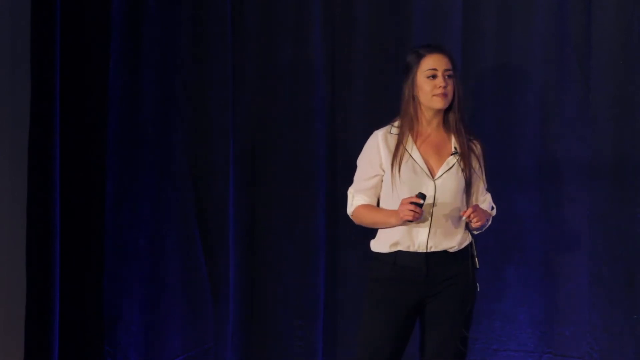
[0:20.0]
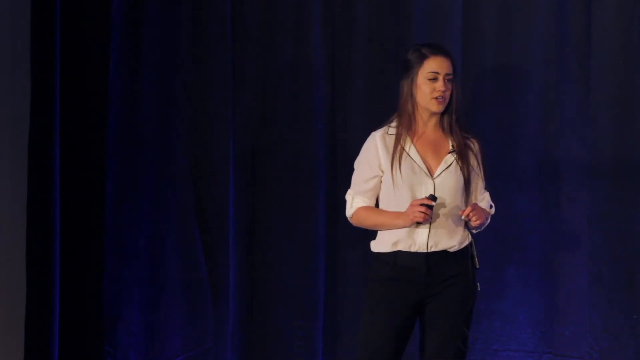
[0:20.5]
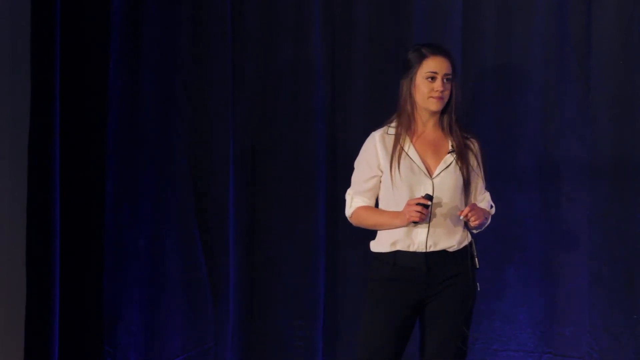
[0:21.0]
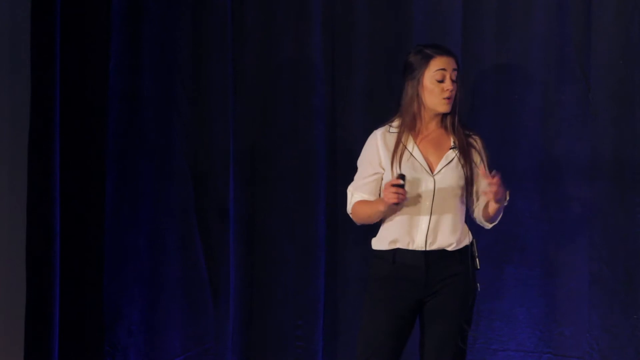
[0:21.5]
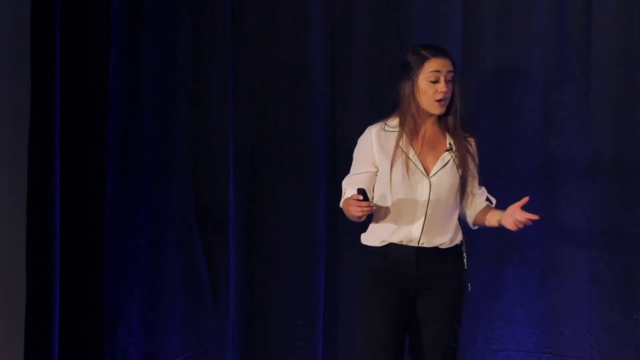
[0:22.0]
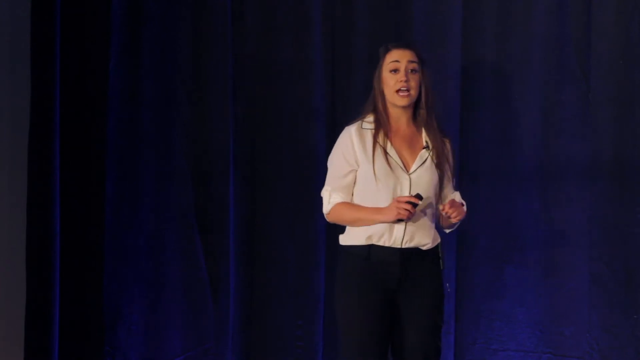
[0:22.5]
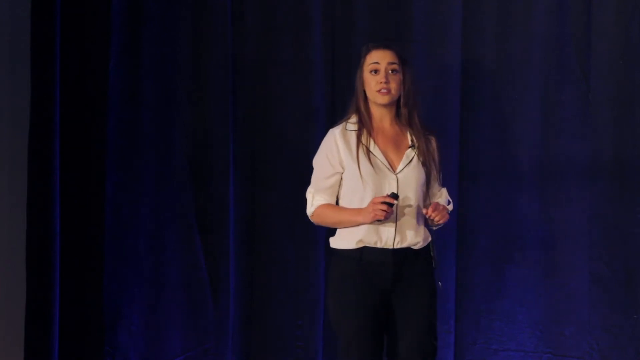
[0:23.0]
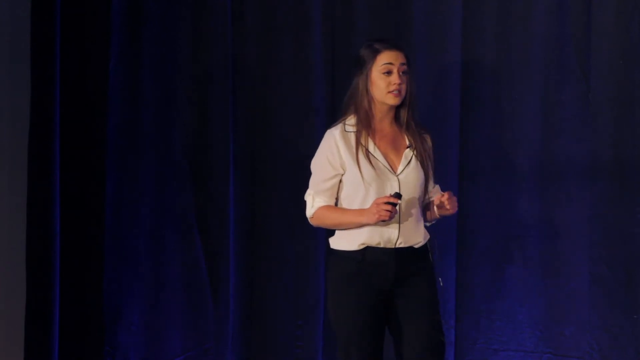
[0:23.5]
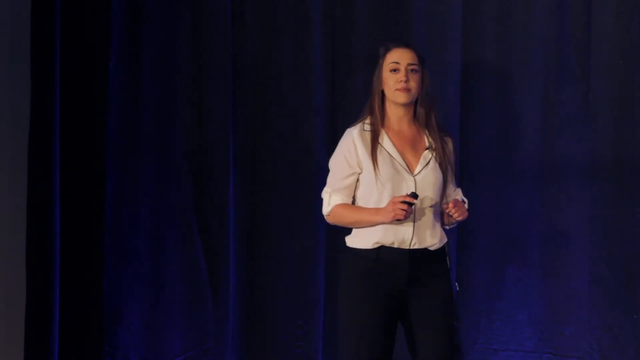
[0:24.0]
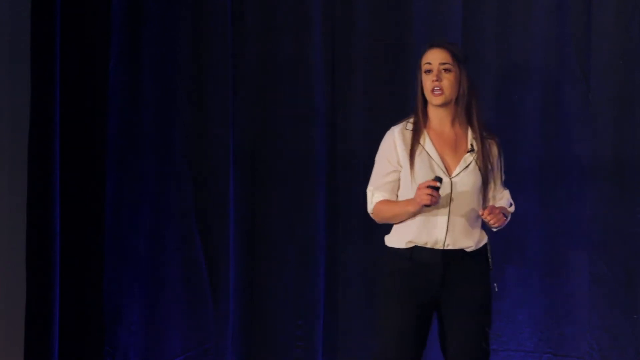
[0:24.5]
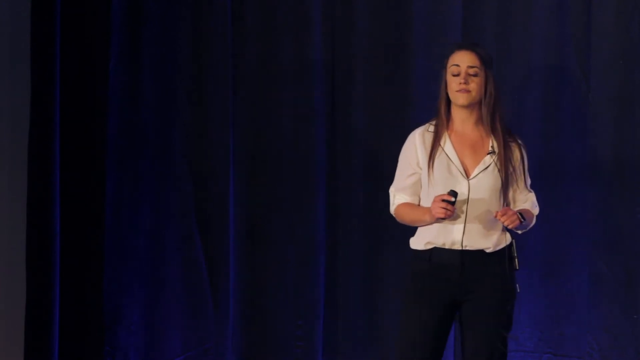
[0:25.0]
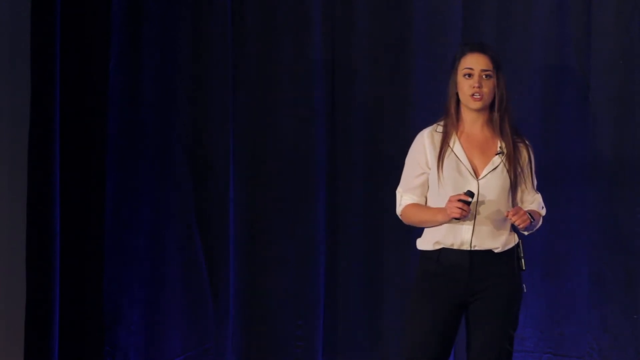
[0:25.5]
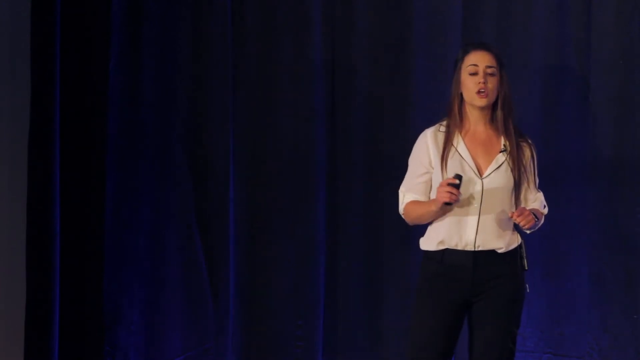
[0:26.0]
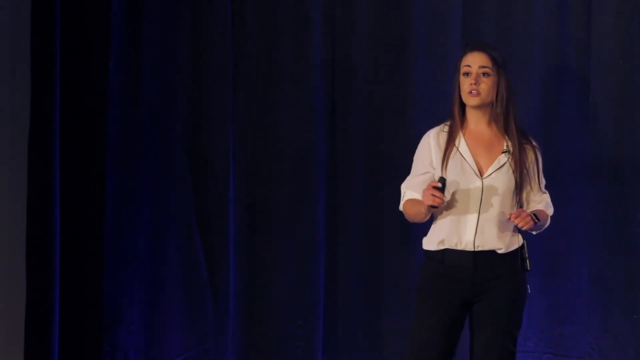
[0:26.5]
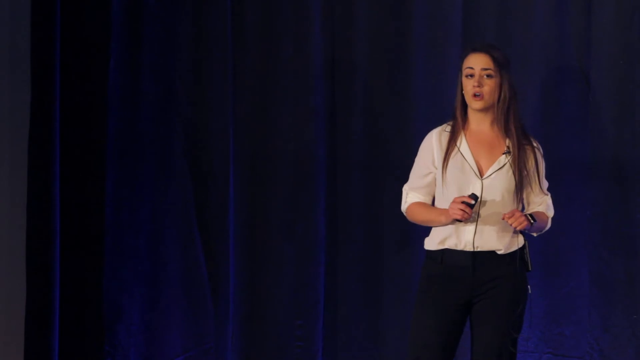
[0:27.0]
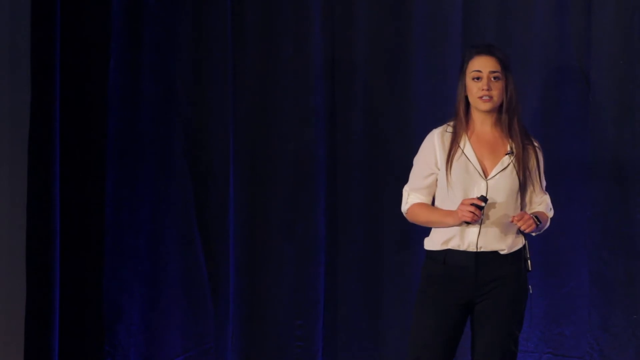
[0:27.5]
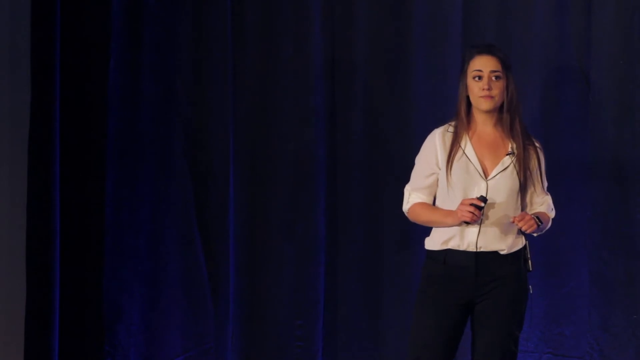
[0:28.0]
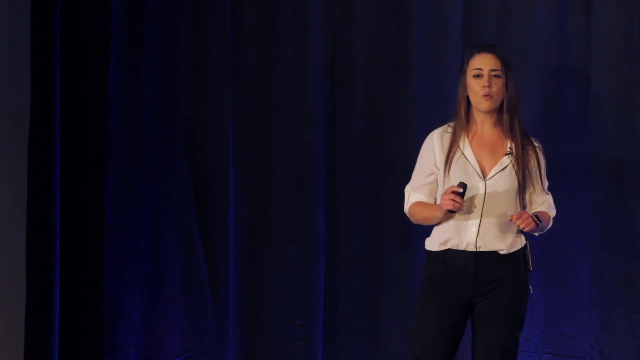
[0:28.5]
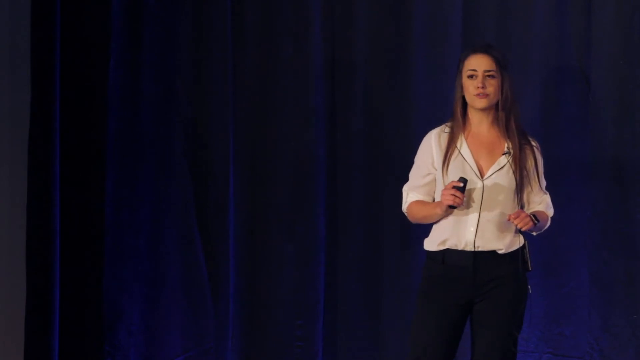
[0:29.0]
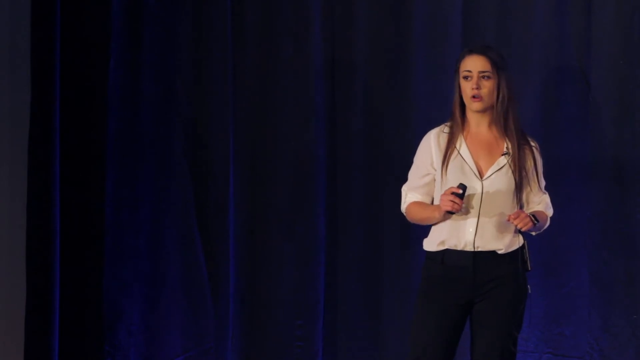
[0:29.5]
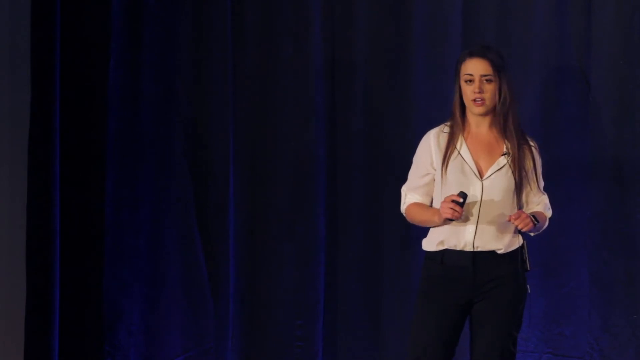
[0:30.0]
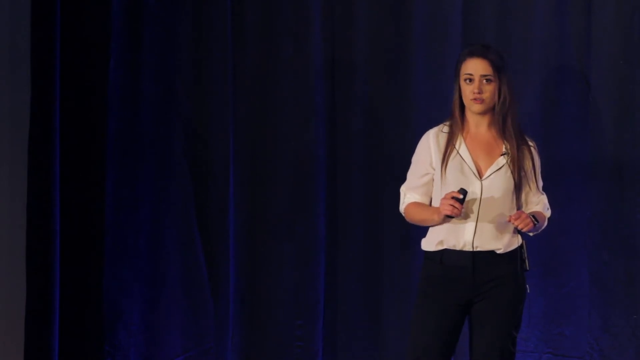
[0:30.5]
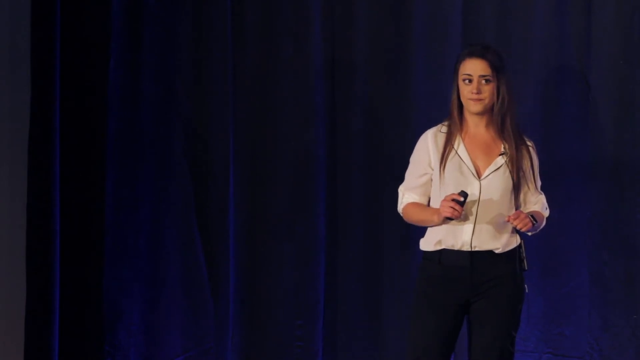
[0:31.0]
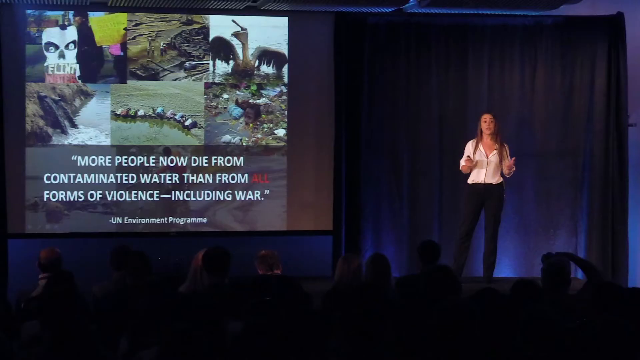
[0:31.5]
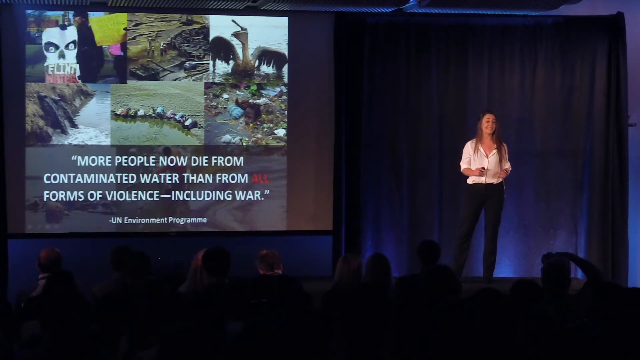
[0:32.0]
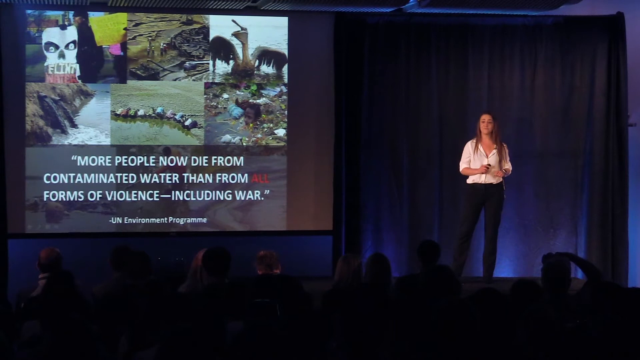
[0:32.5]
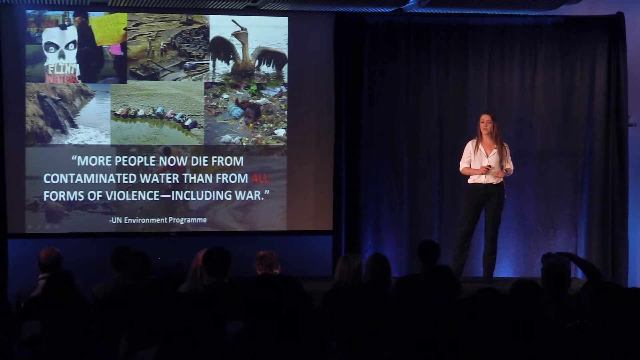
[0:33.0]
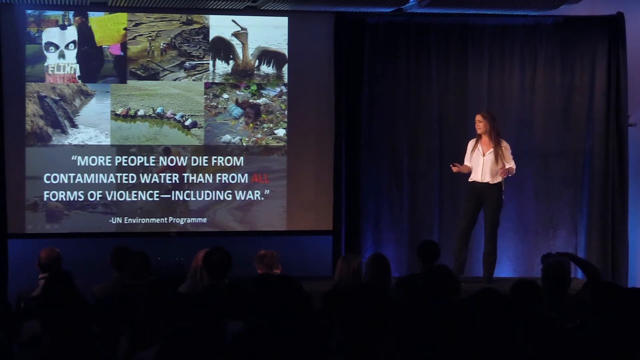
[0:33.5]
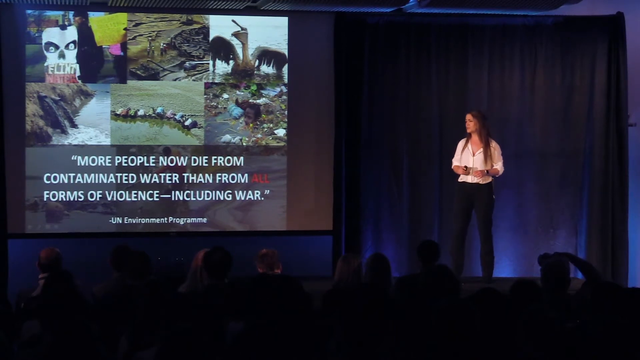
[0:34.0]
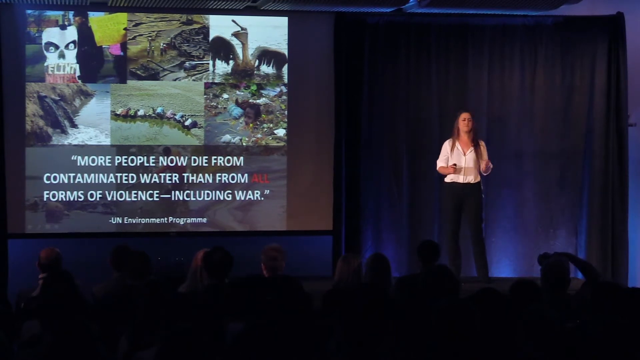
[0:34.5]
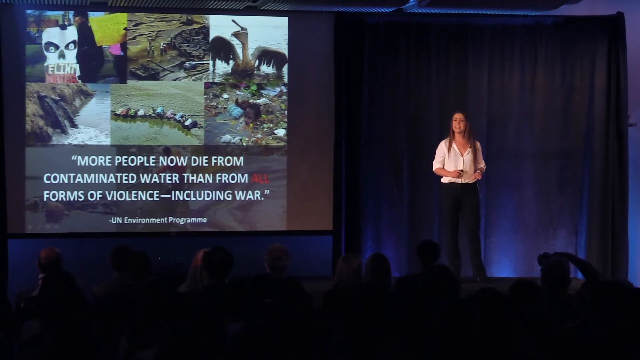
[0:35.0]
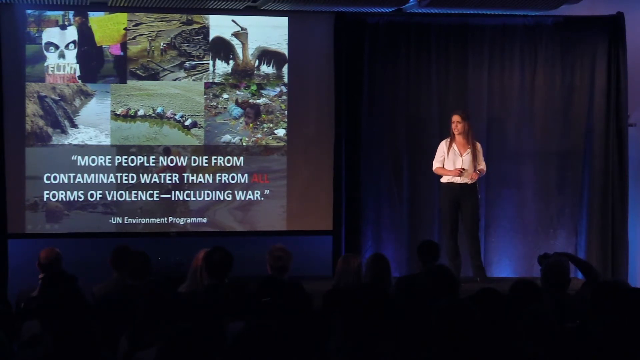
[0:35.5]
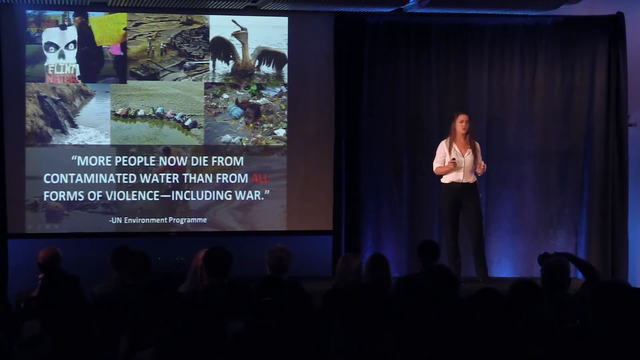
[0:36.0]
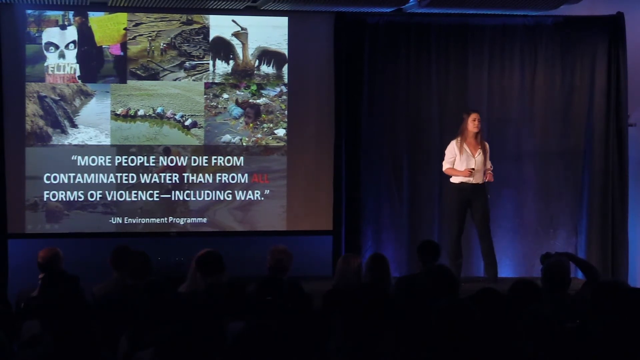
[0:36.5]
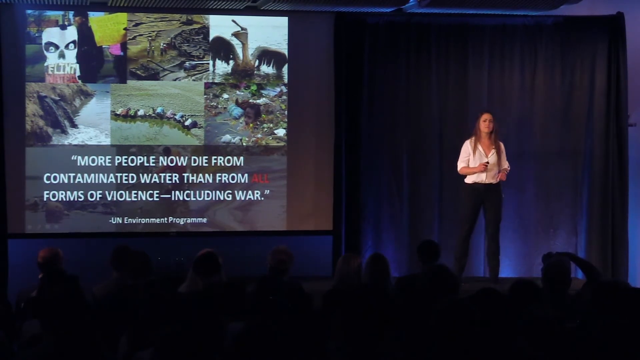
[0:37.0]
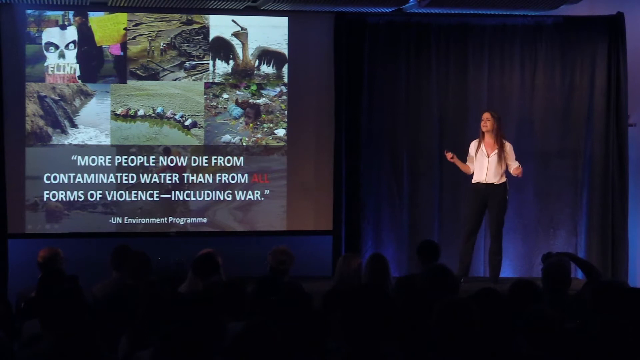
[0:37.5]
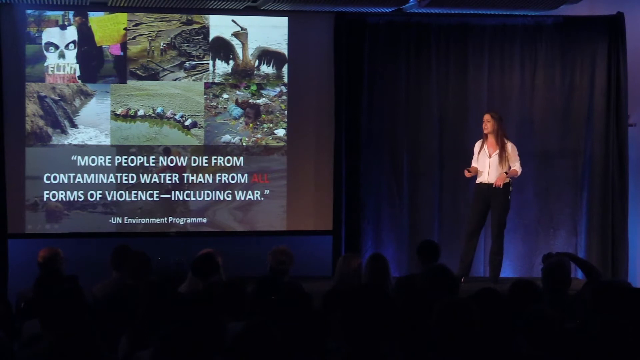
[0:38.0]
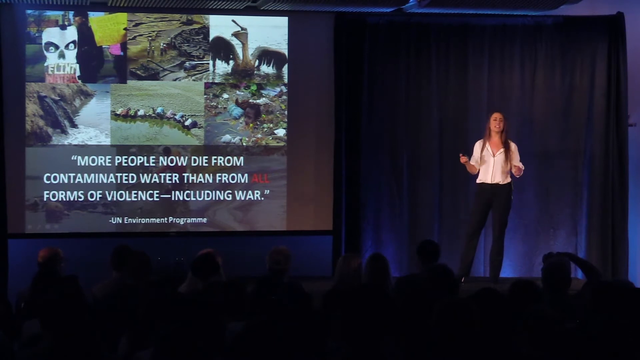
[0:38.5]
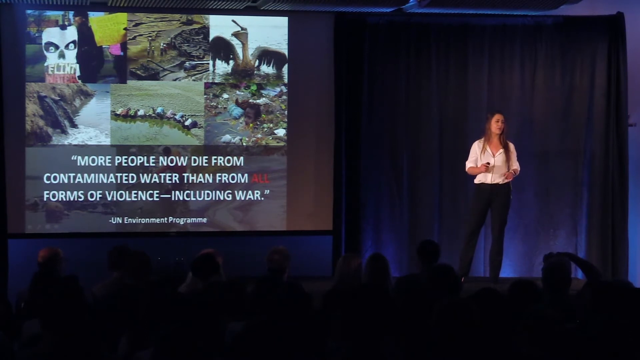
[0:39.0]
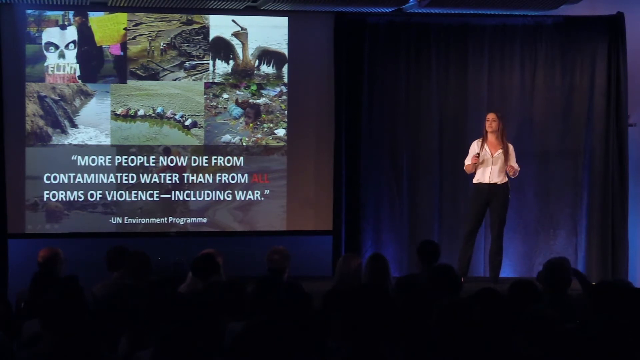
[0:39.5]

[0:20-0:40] In a TED Talk-style speech, a woman speaks, visible toward the right side of the frame. She wears a white shirt and black slacks, holds a black clicker, and appears to wear a smartwatch. She is very animated with her hands, bringing them away and rolling them over a bit, and moves the clicker around to emphasize her point. To her left is a projection screen with a series of doomsday-style images related to environmental pollution and white text reading "more people now die from contaminated water than from all forms of violence including war." The audience watches her in the foreground, and a blue curtain is visible behind her. She continues speaking and gesturing. The screen shows apparently about nine images: a man holding up a skull sign that says "Flint water"; people in hard hats standing around a giant open crater that looks water-related; a bird covered in oil; toxic sludge coming out into water; children huddled around a green, dirty puddle; a child floating in trash water; children's toys floating in water; a man in an orange shirt trying to fish something out with a net; and what looks like another water picture. The images have a doom-and-gloom atmosphere.